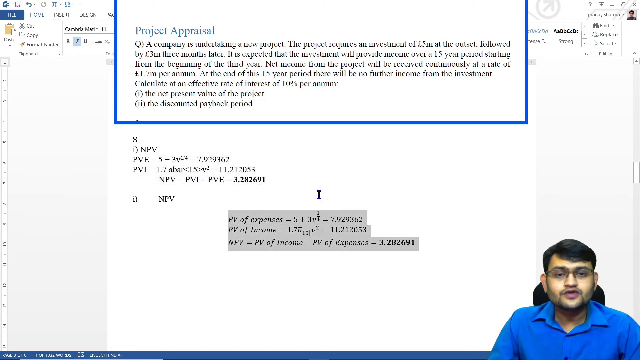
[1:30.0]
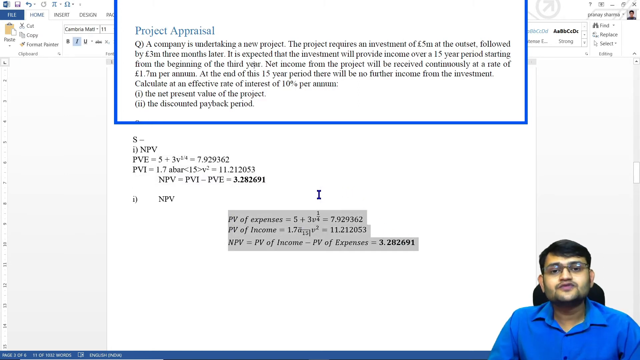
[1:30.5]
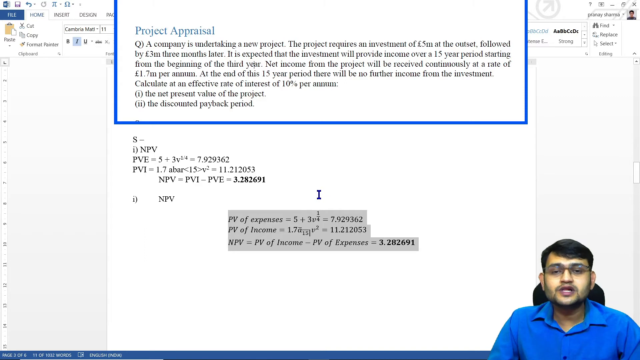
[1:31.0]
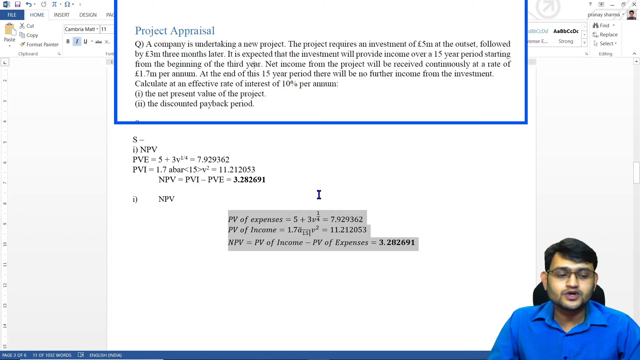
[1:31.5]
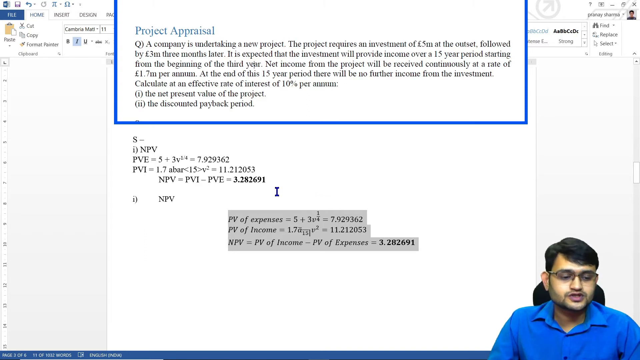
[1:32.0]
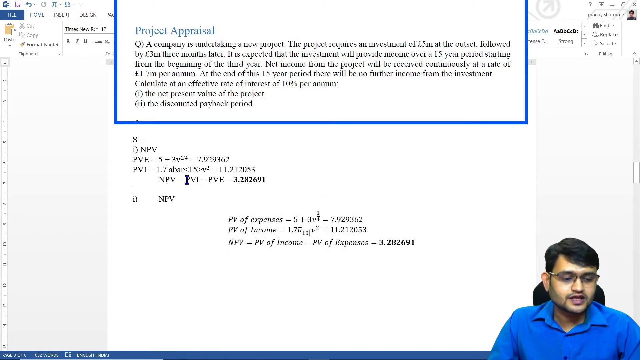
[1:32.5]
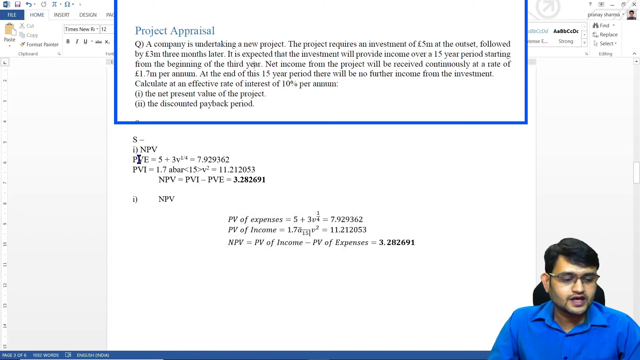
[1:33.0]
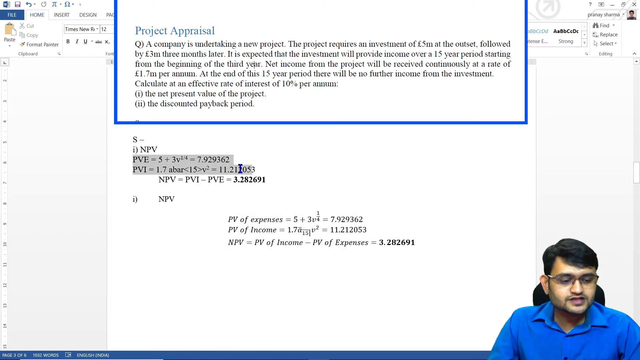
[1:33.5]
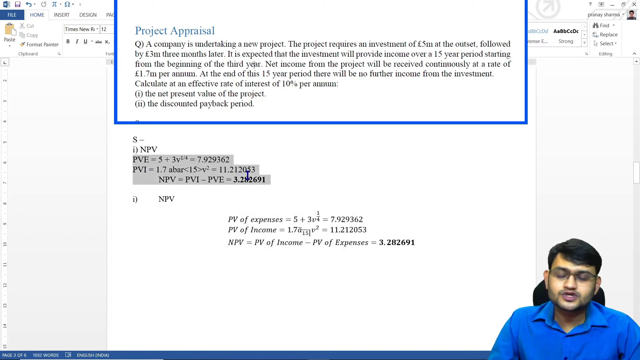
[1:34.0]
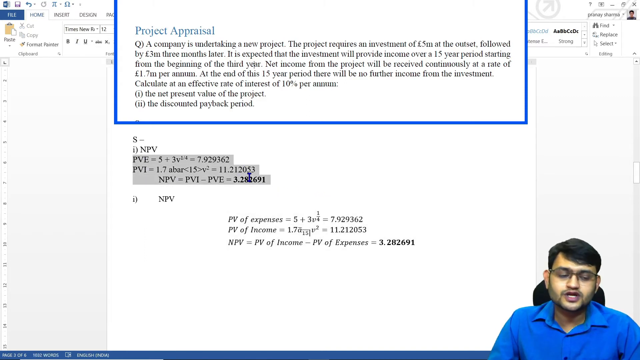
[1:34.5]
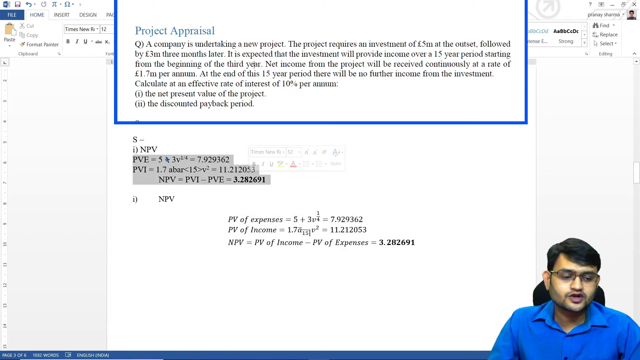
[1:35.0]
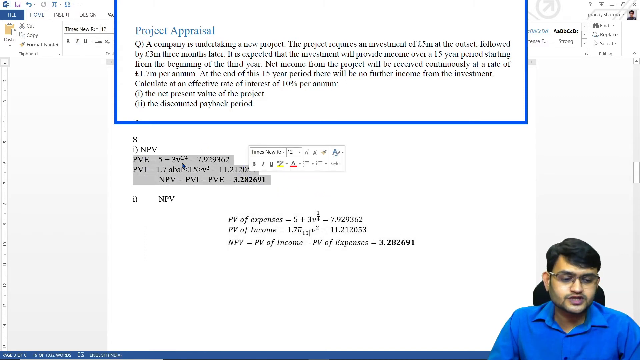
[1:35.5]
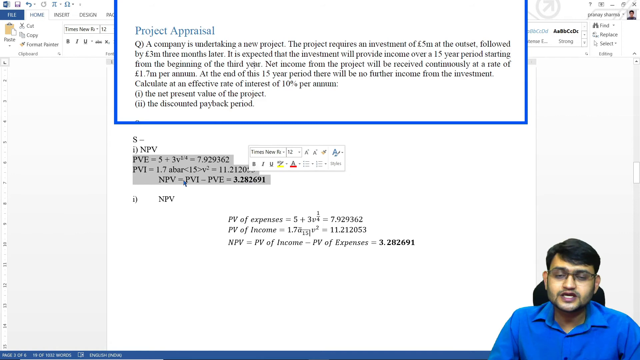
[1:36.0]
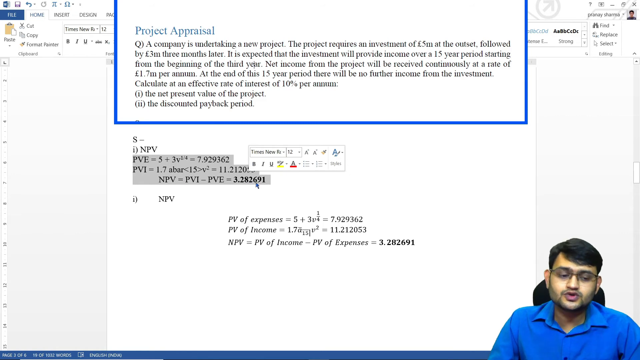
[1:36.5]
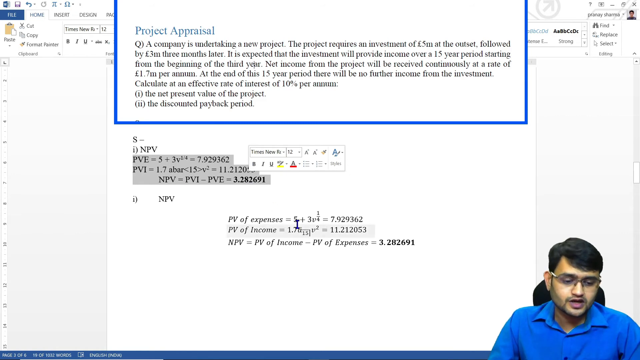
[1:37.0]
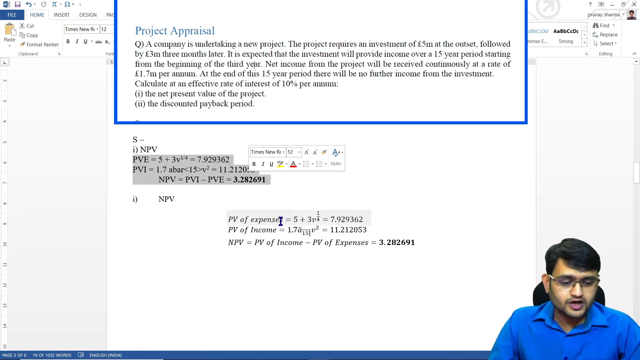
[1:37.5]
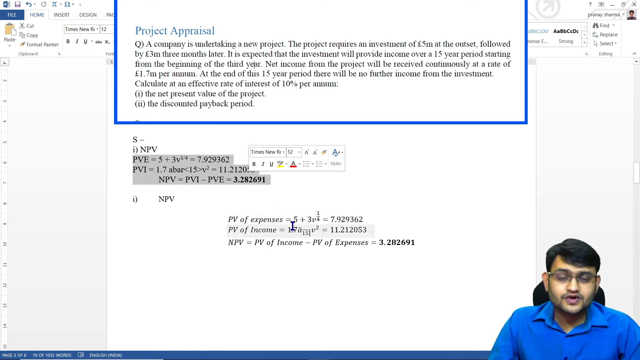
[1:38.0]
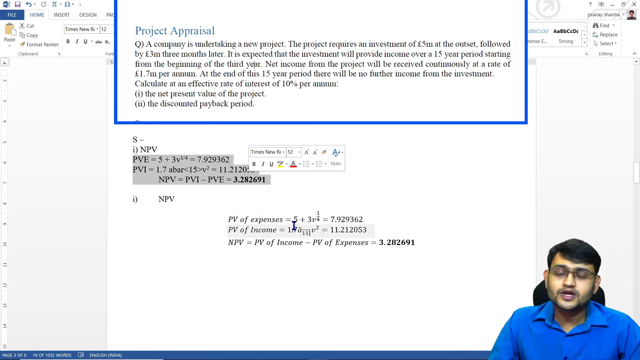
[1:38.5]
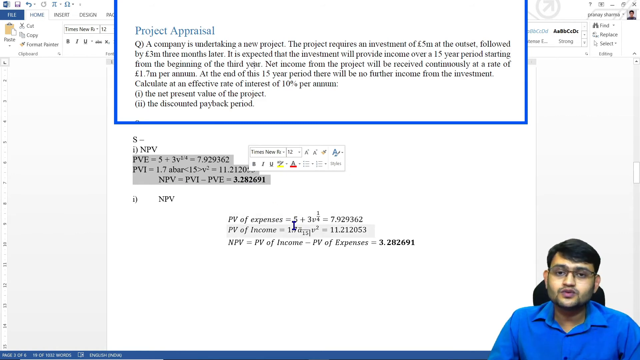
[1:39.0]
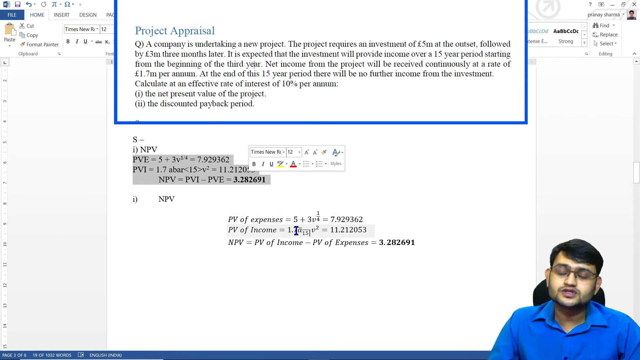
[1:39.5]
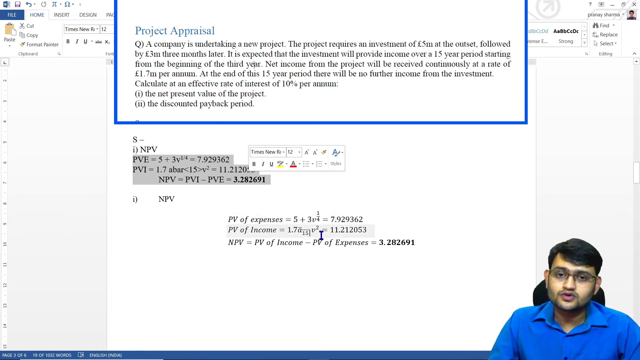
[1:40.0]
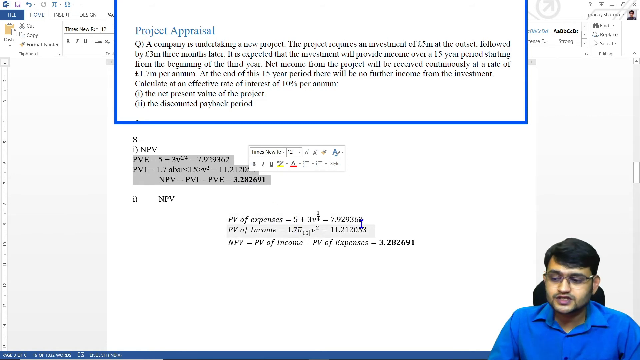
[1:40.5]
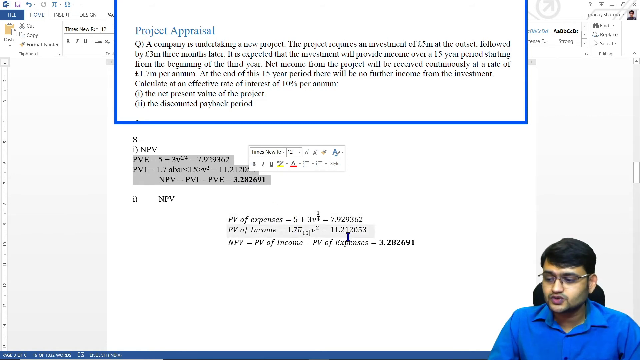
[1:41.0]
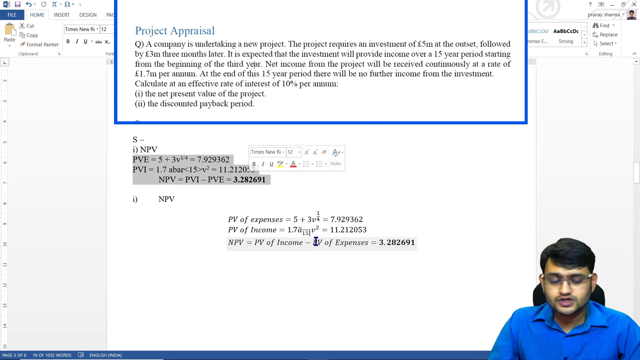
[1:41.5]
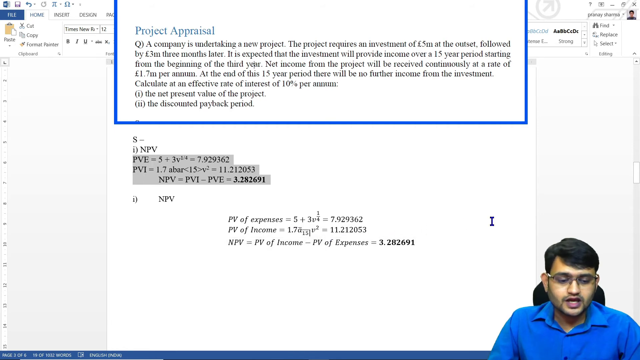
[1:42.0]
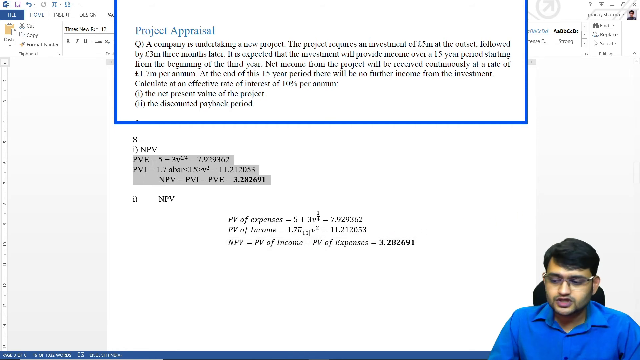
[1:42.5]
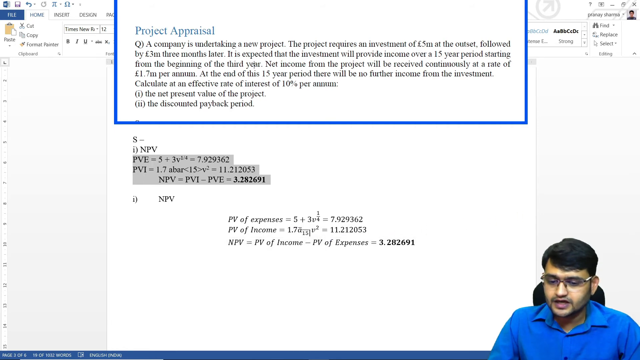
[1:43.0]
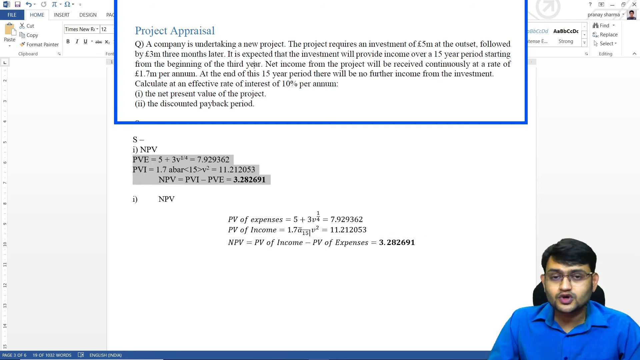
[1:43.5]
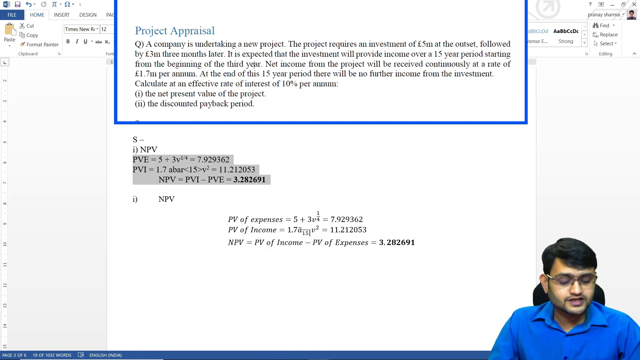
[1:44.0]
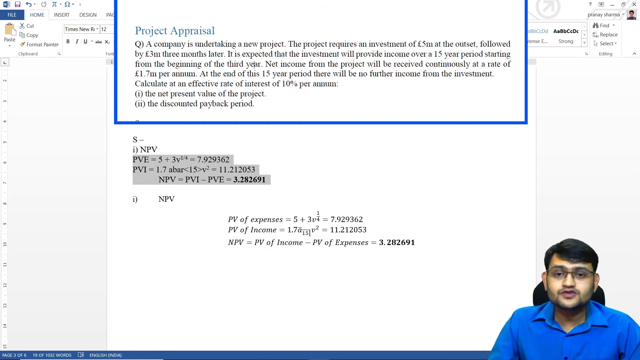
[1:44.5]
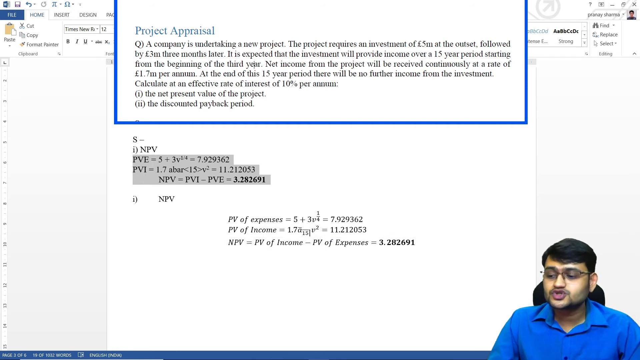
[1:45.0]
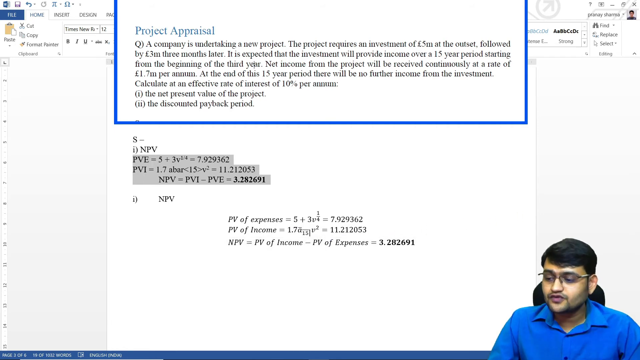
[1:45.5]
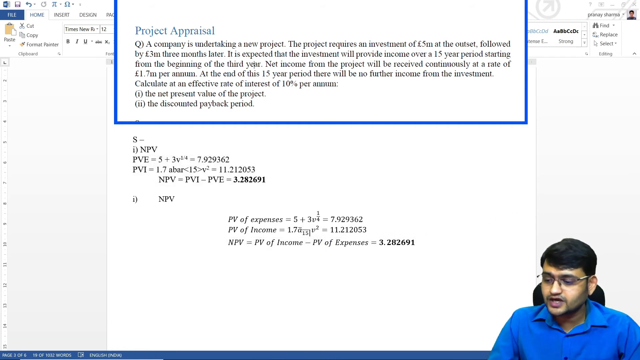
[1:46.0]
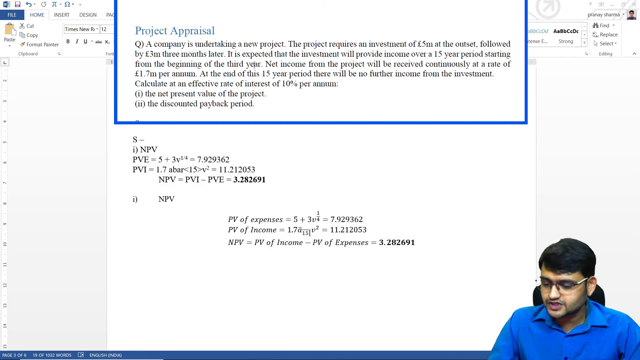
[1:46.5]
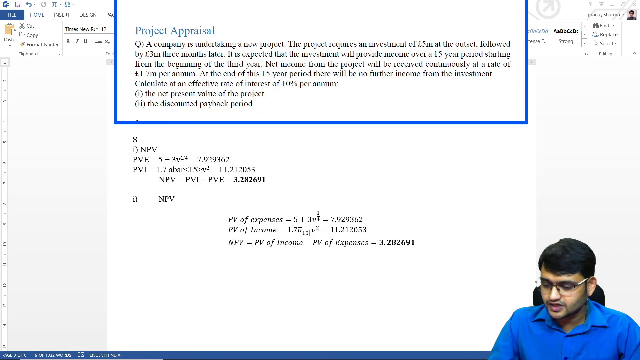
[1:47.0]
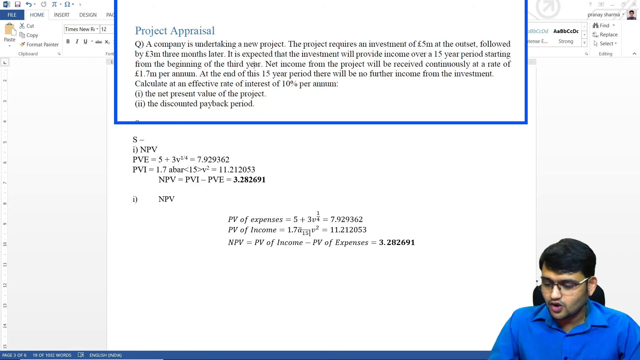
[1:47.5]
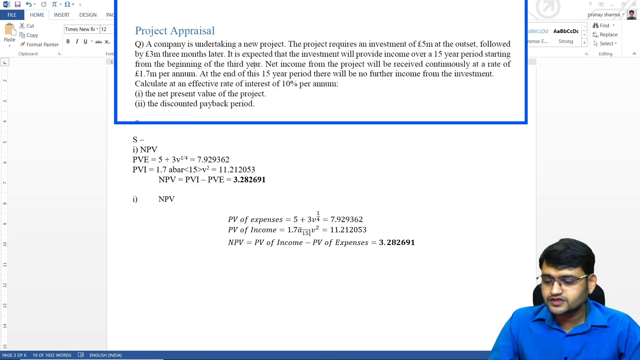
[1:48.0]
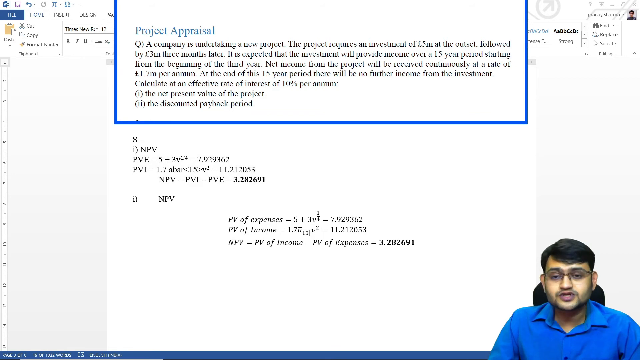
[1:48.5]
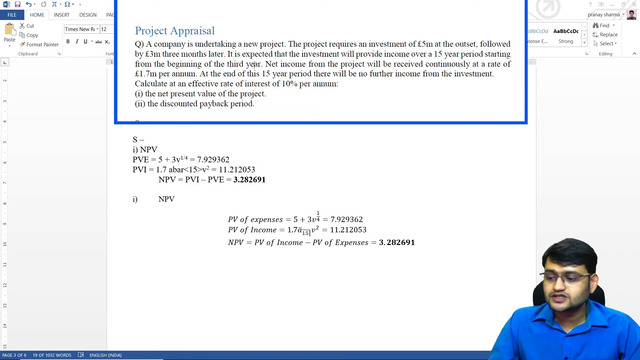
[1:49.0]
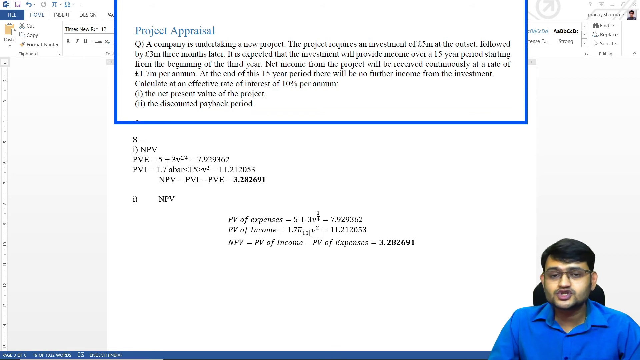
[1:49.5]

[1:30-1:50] The bottom three lines, about PV of expenses, PV of income and the final equation "NPV = PV of income - PV of expenses", remain highlighted while the man speaks. He moves his cursor up to the abbreviated equations for PVE and PVI above them and highlights those, then circles around them with the cursor. A white rectangle with font options appears, disappears and appears again, showing Time New Roman at size 12 along with options for making the font larger or smaller, bolding, highlighting, and creating a bullet point checklist. He makes a couple of circles around that equation, then moves back down to the explained lines; as he moves up and down over them they become highlighted in light gray. He keeps talking, moves his cursor off screen to the right, and then looks downward.